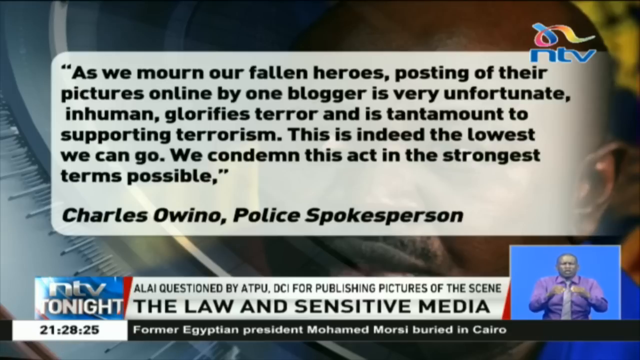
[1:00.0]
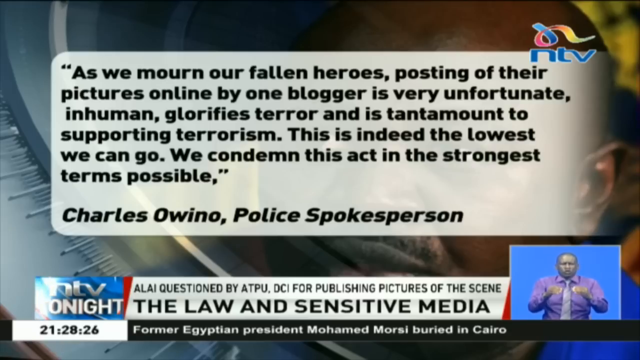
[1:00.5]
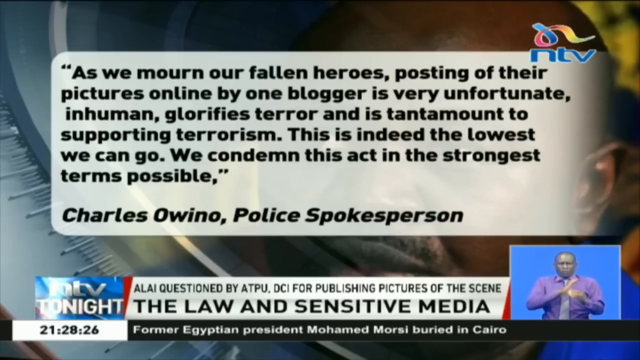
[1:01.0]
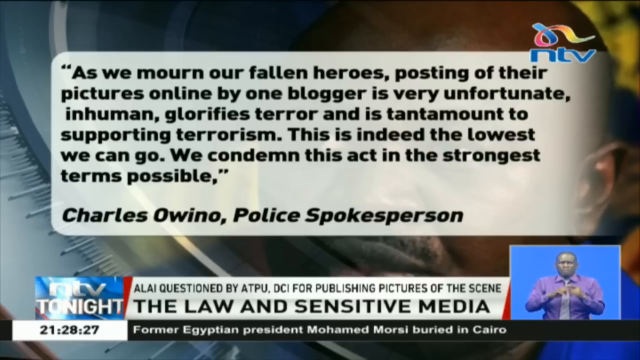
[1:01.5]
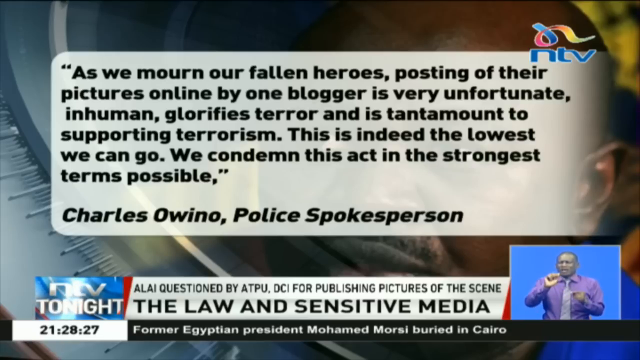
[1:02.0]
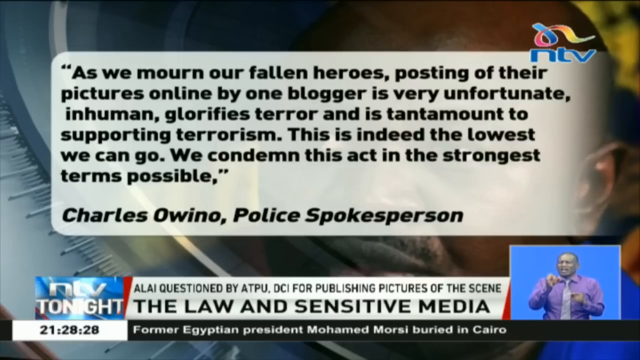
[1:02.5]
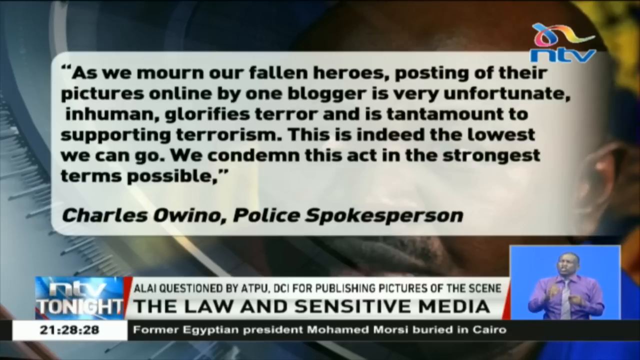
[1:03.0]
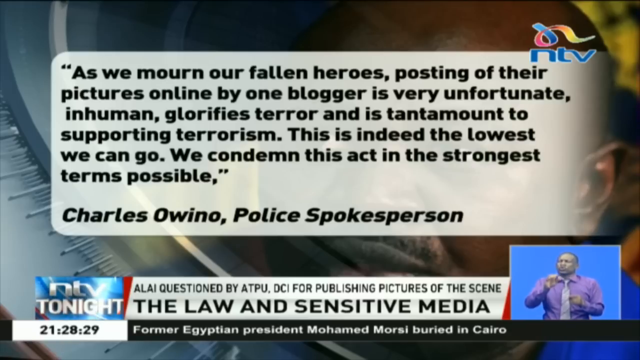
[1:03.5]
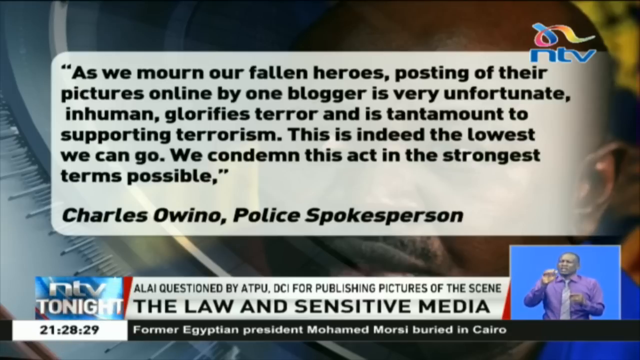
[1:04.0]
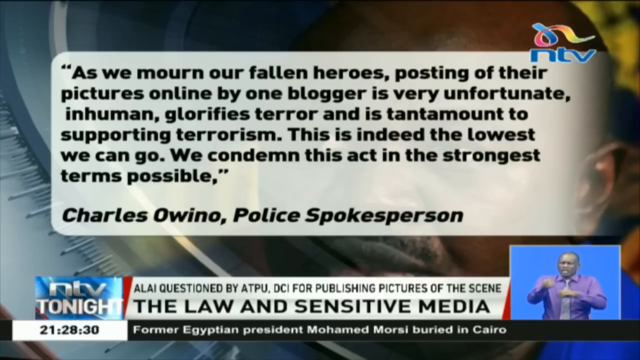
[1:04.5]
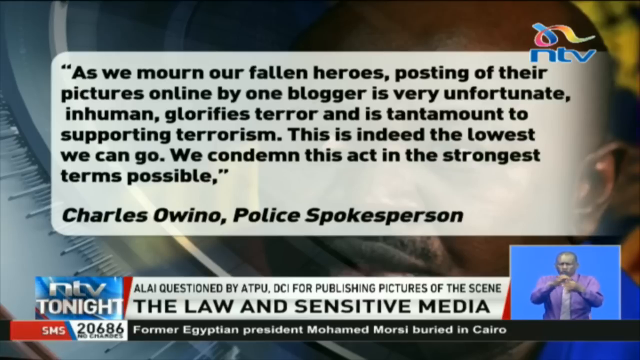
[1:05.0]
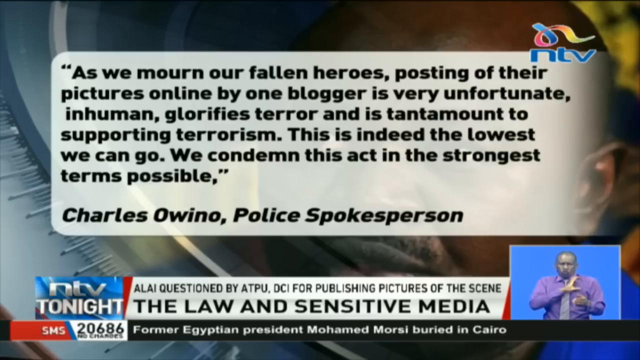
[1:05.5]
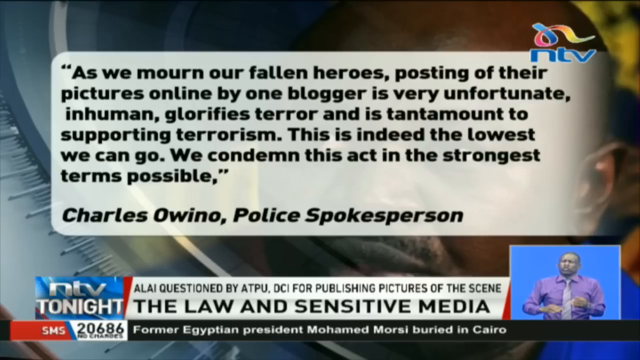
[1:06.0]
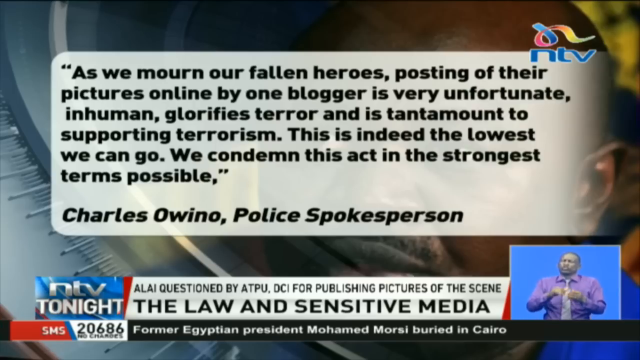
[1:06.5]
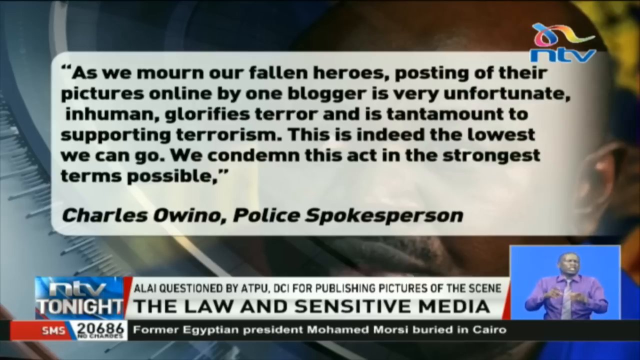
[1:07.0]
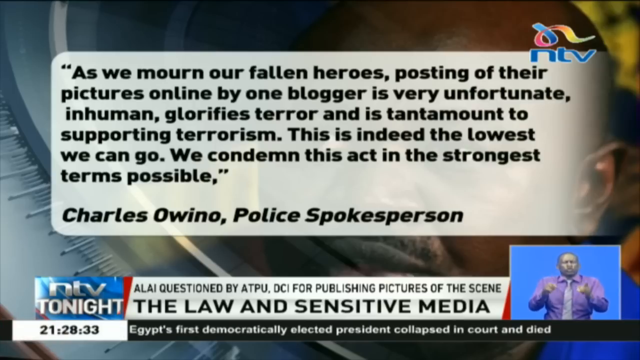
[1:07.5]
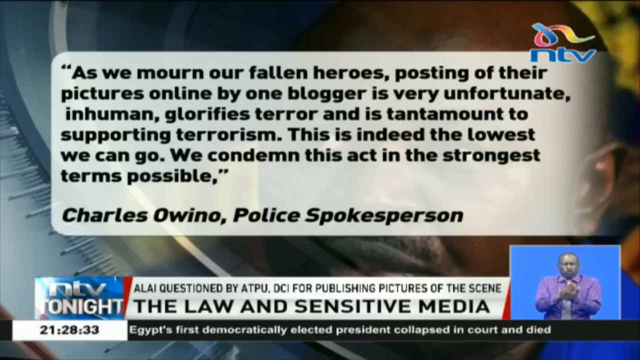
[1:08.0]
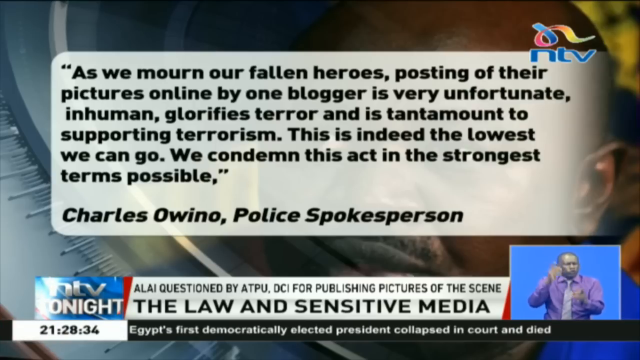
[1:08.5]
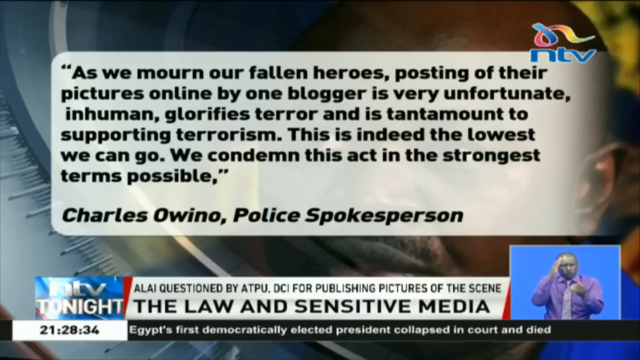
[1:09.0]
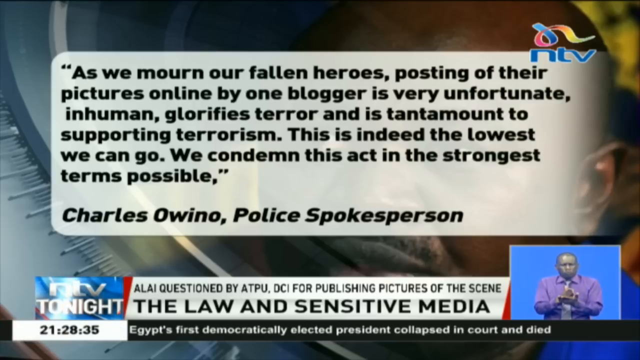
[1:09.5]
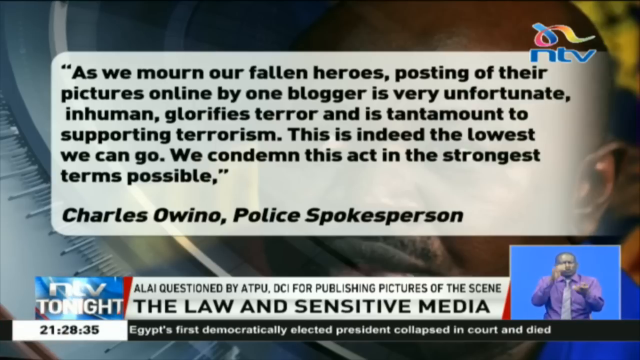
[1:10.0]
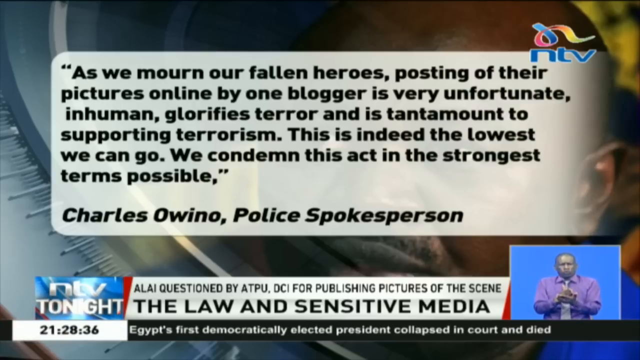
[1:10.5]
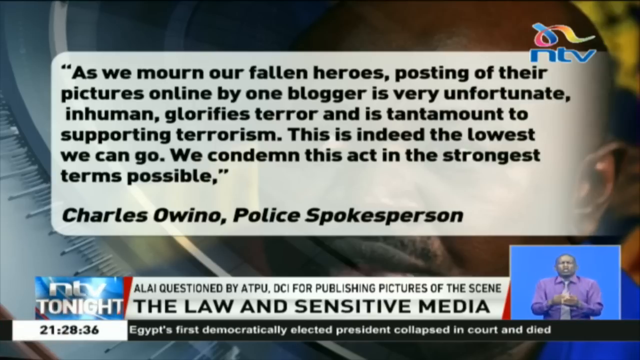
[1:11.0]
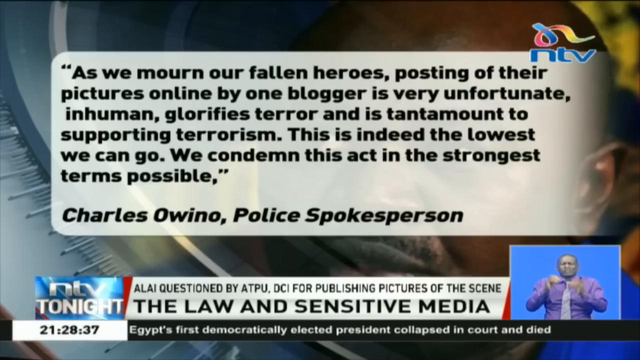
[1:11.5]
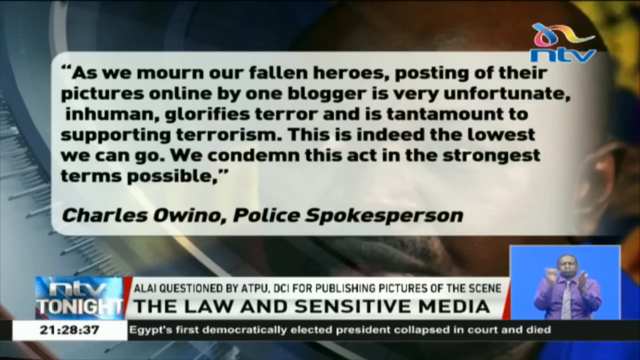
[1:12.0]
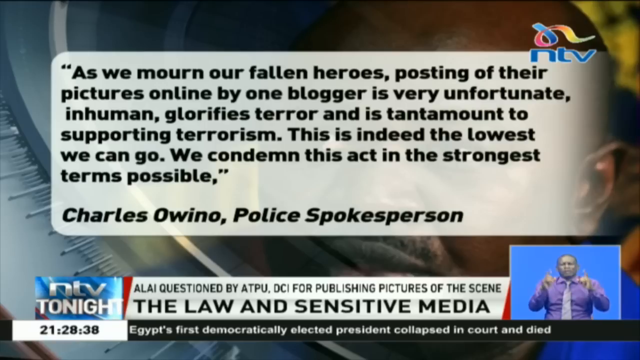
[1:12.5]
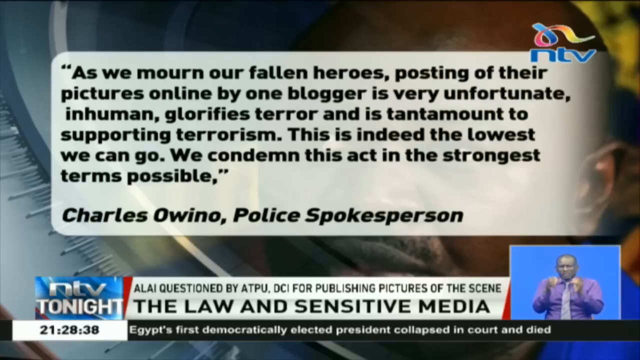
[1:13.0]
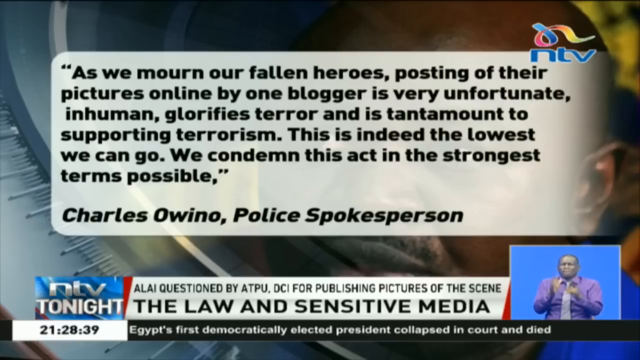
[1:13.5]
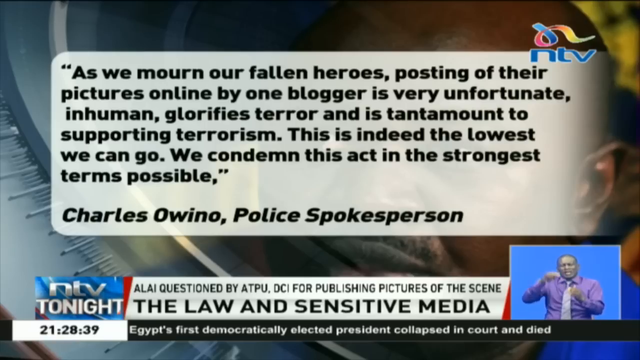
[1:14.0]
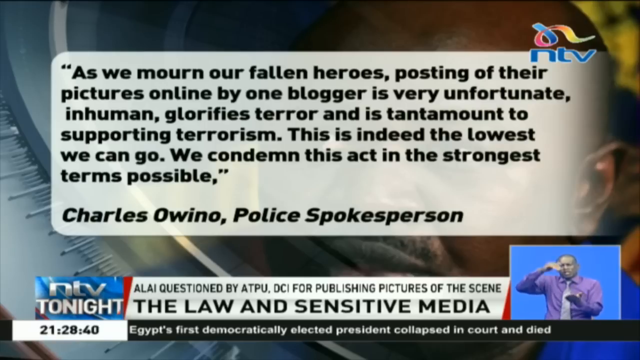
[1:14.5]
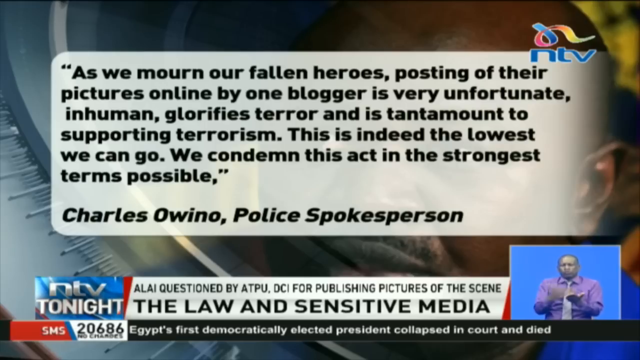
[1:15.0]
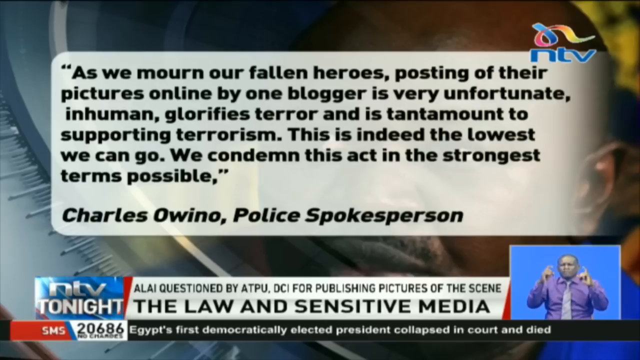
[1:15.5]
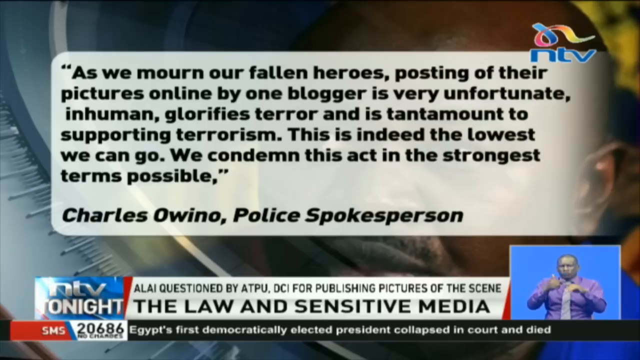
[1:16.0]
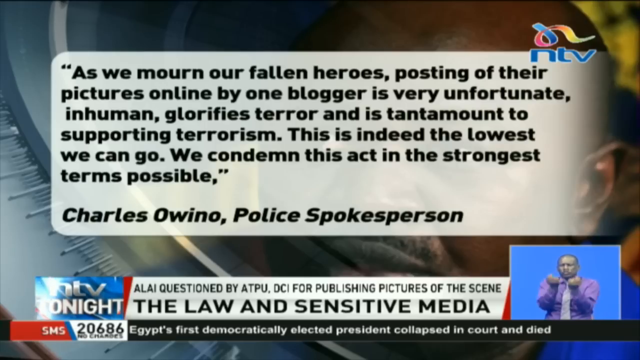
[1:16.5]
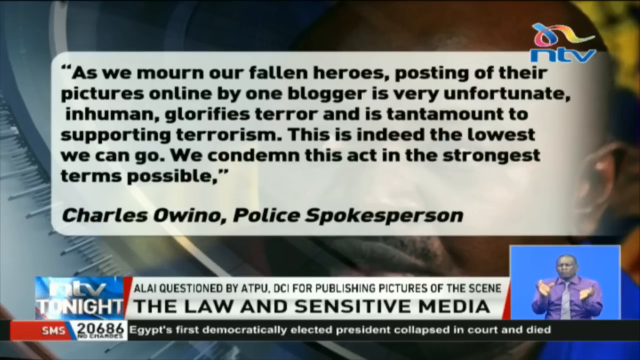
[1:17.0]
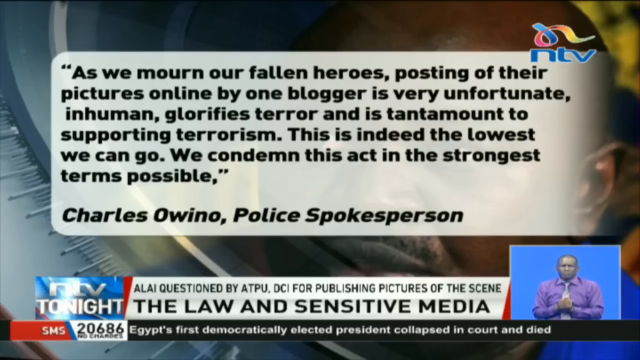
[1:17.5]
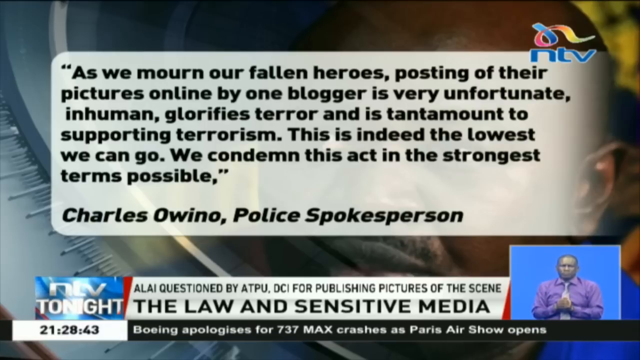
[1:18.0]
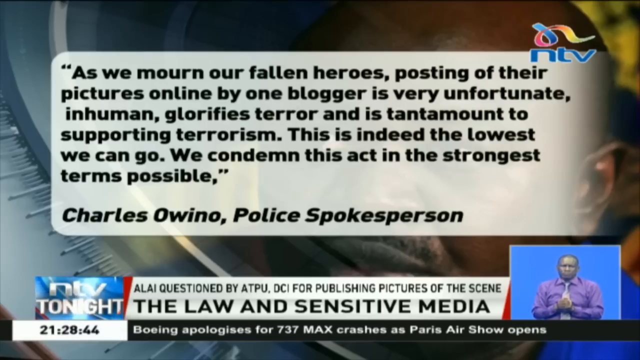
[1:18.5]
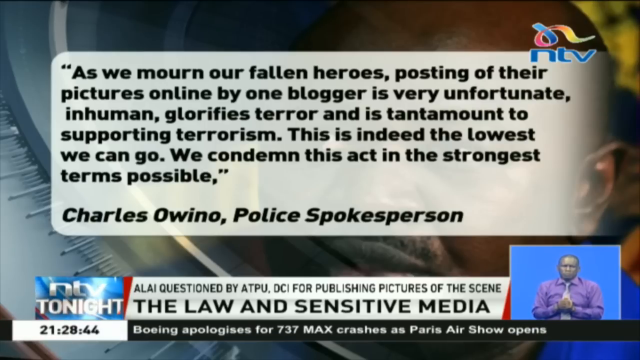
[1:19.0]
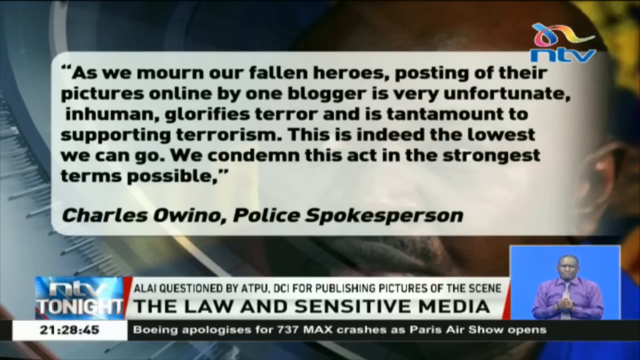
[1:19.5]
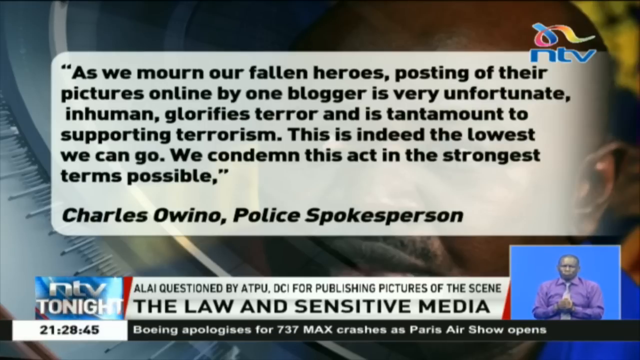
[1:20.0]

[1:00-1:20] The statement from the police spokesperson remains on the upper part of the screen. The ticker at the bottom reads "Egypt's 1st democratically elected president collapsed in court and died." Above it, the banner ends with "for publishing pictures of the scene, the law and sensitive media." At the very bottom, text then reads "Boeing apologizes for 737 Max crashes as Paris airshow opens." In the lower right corner, a person in a purple shirt stands in front of a blue background, using sign language throughout the video to interpret the newscast for deaf viewers.